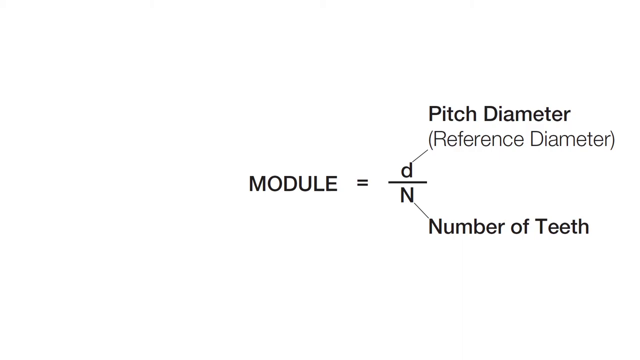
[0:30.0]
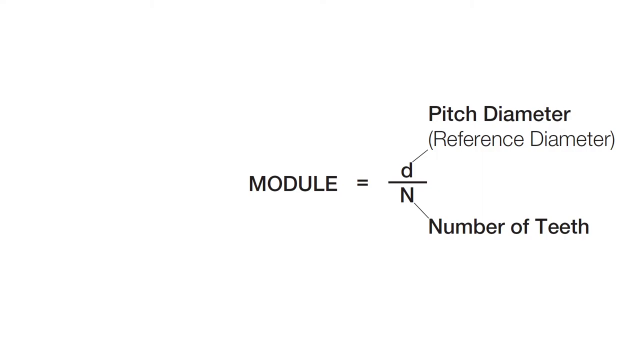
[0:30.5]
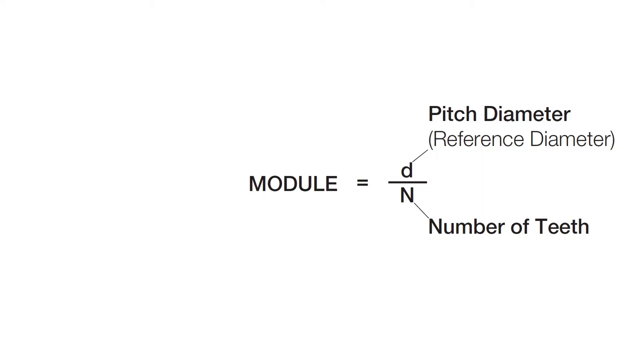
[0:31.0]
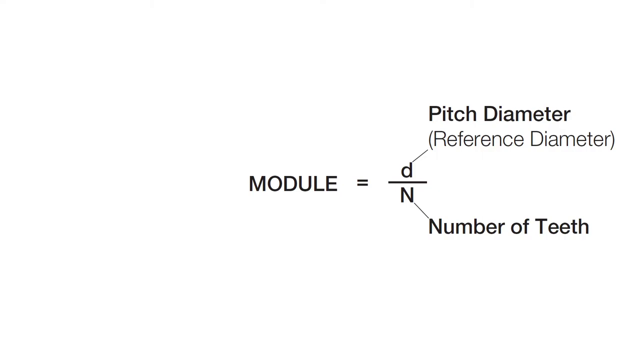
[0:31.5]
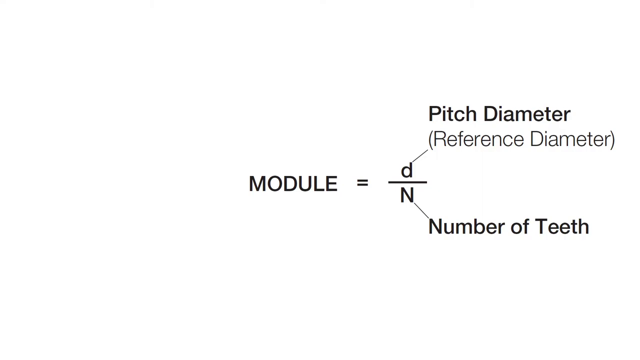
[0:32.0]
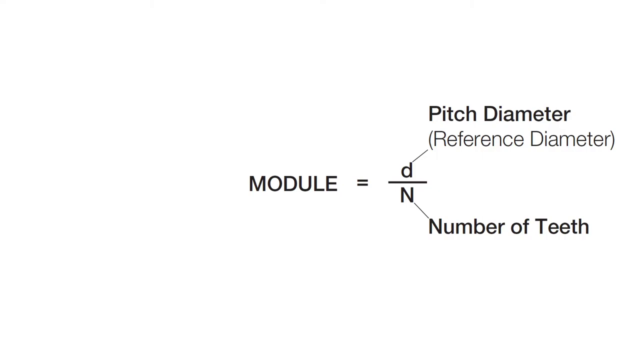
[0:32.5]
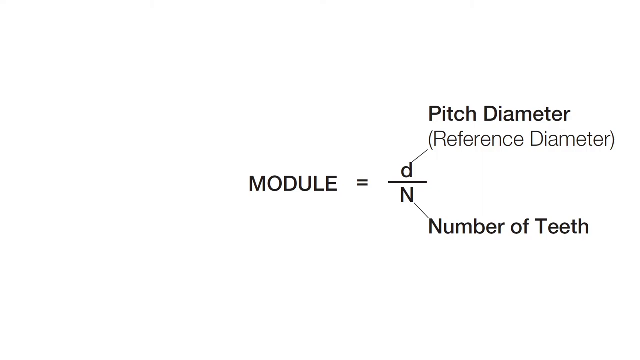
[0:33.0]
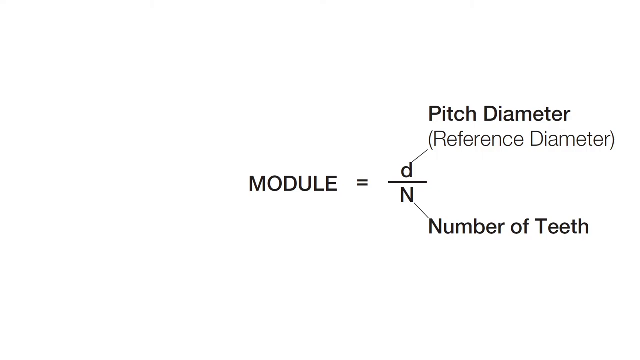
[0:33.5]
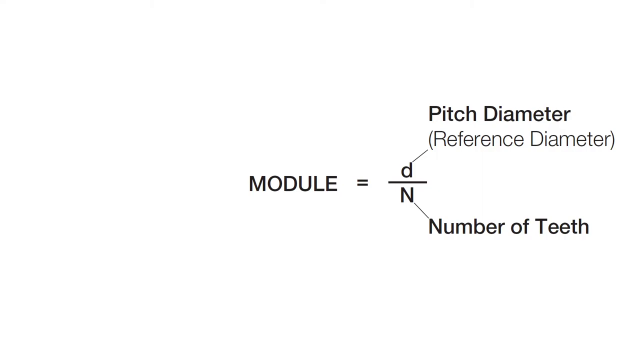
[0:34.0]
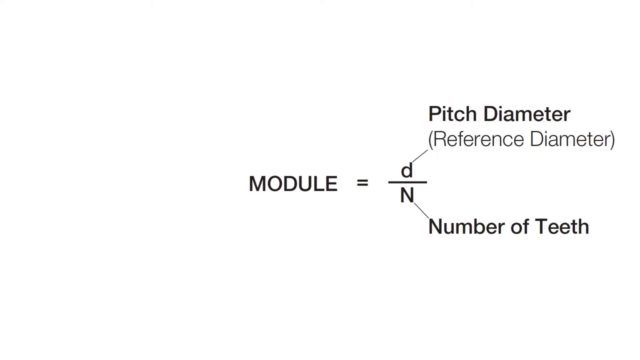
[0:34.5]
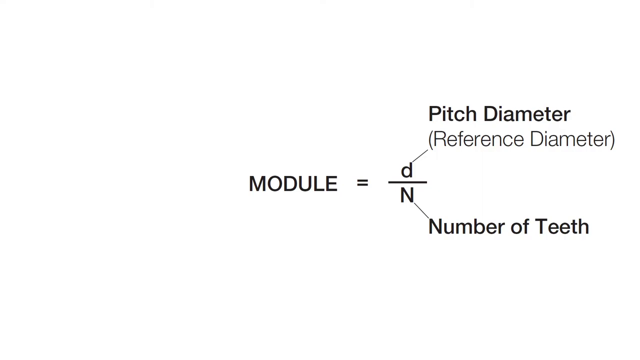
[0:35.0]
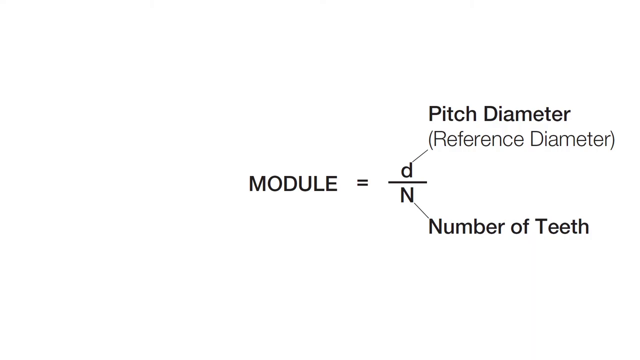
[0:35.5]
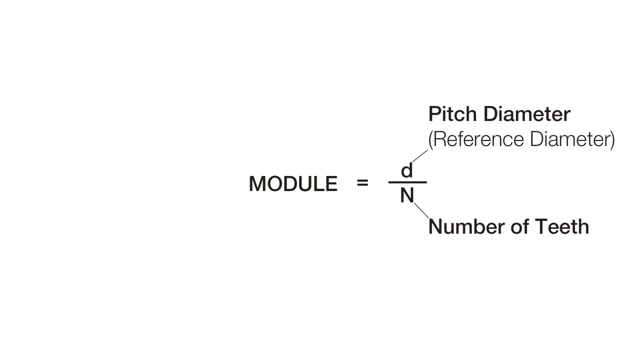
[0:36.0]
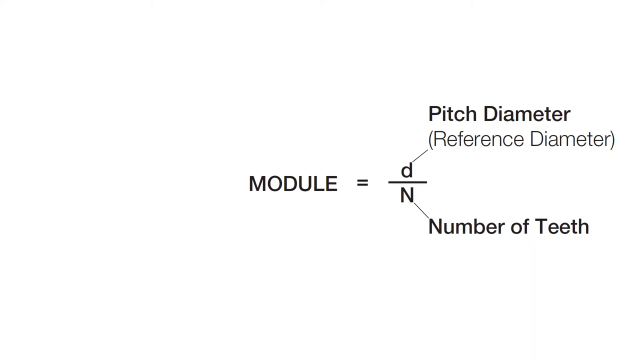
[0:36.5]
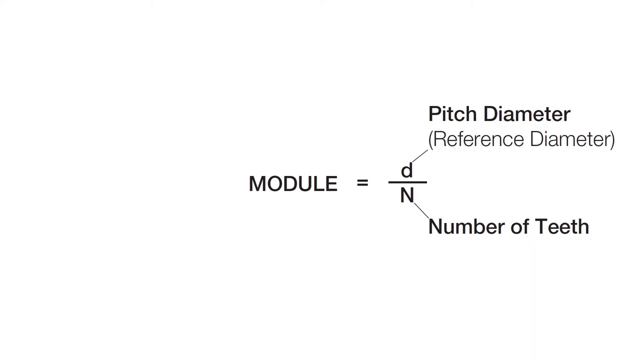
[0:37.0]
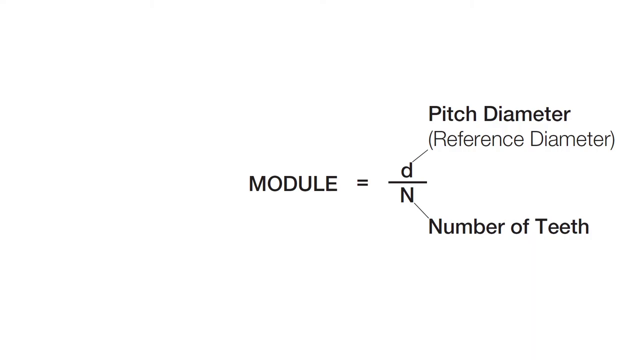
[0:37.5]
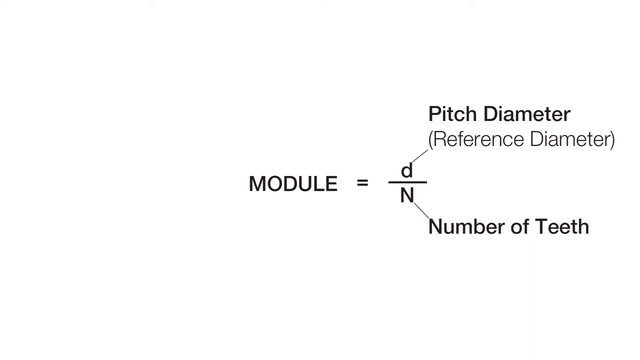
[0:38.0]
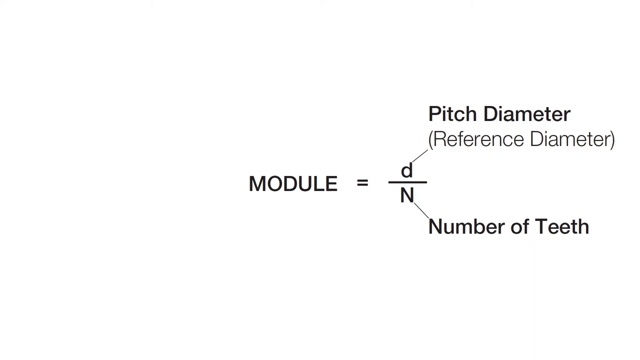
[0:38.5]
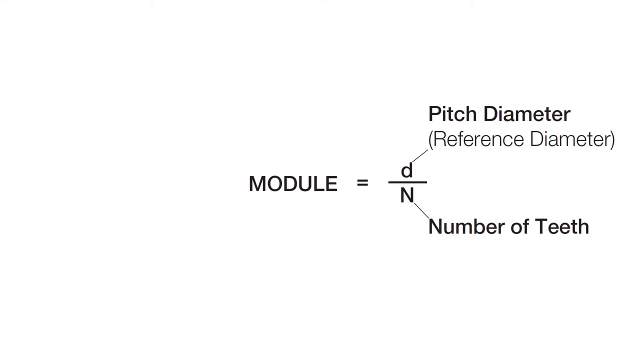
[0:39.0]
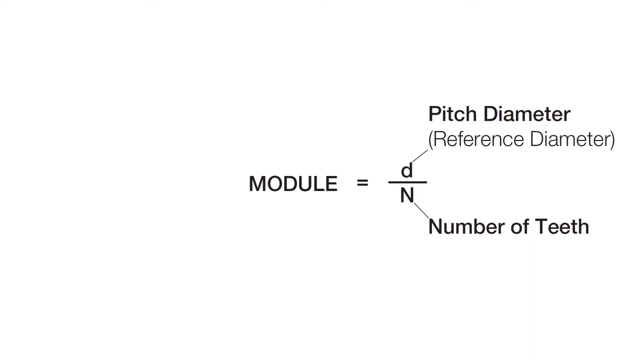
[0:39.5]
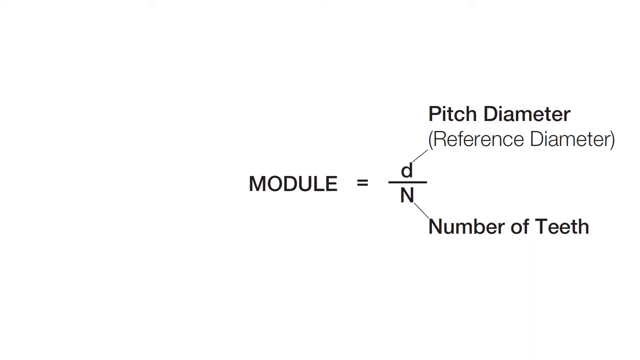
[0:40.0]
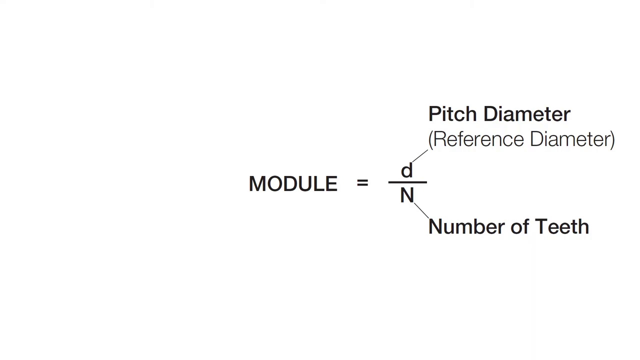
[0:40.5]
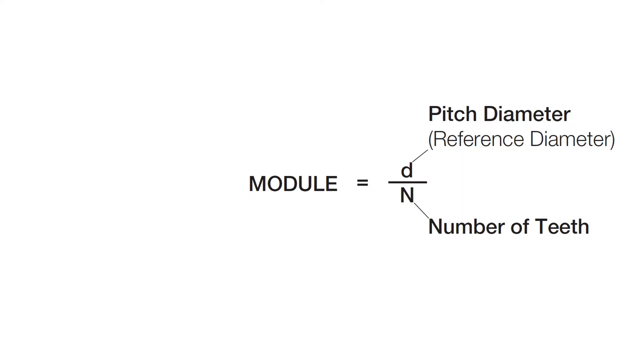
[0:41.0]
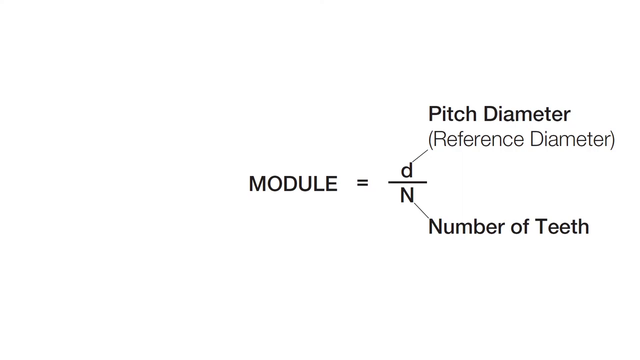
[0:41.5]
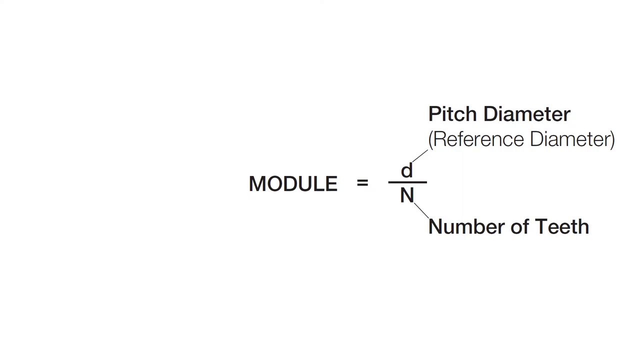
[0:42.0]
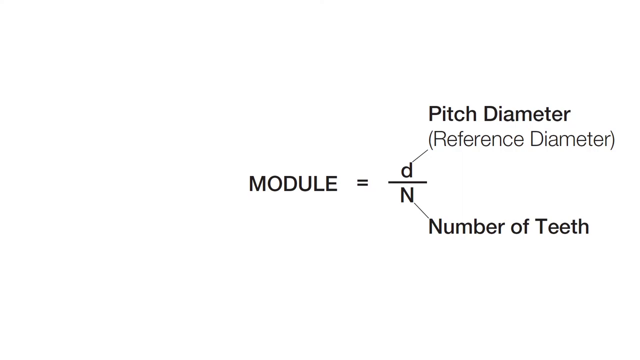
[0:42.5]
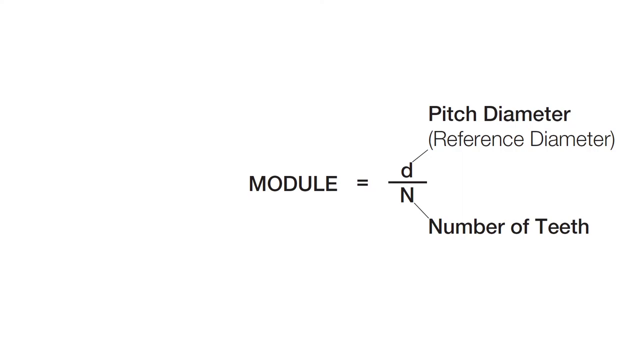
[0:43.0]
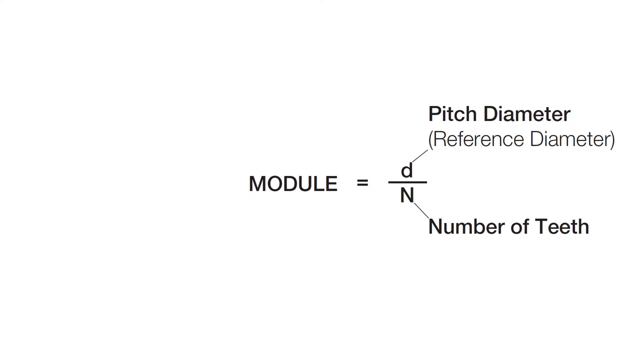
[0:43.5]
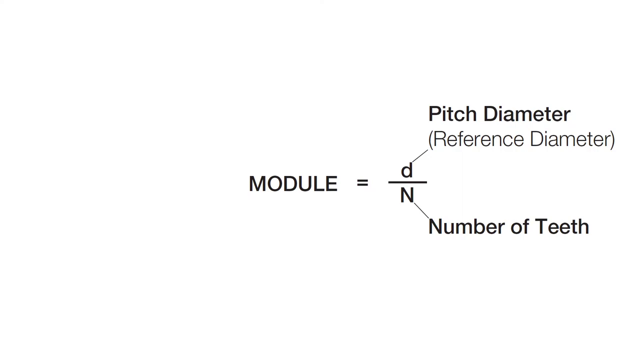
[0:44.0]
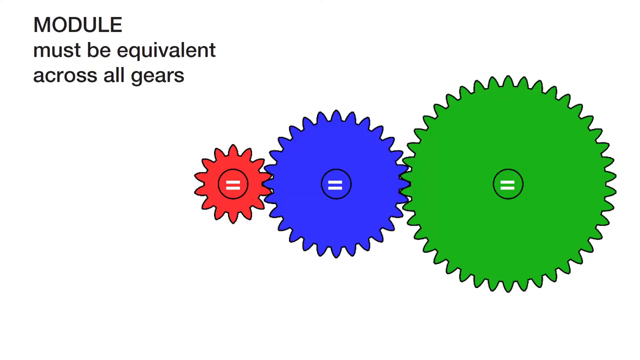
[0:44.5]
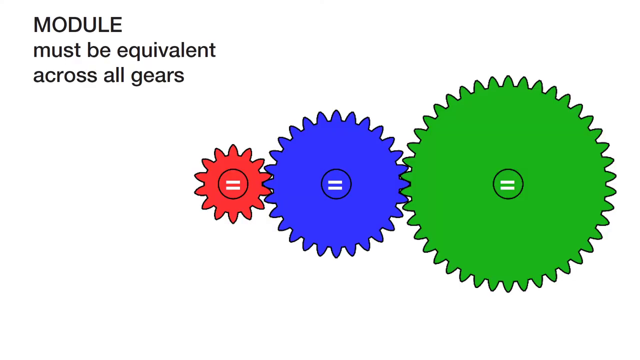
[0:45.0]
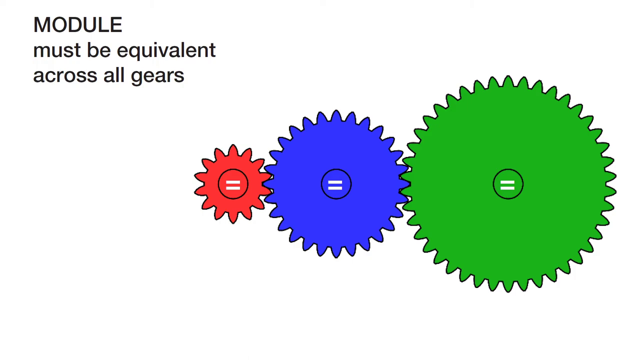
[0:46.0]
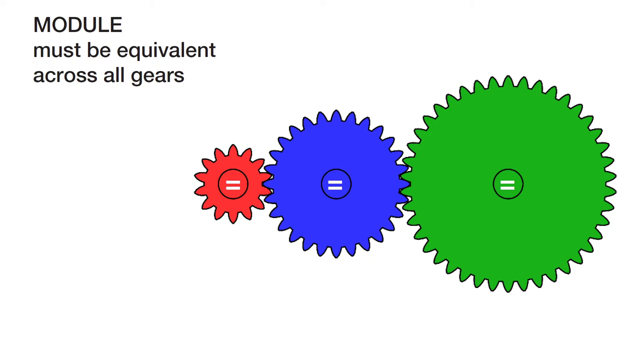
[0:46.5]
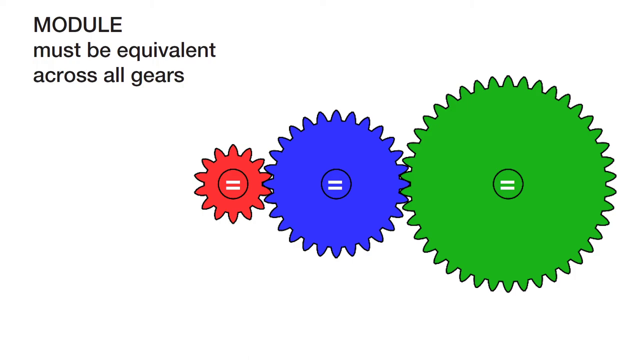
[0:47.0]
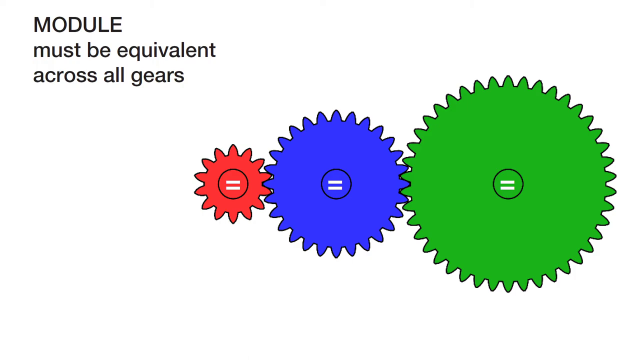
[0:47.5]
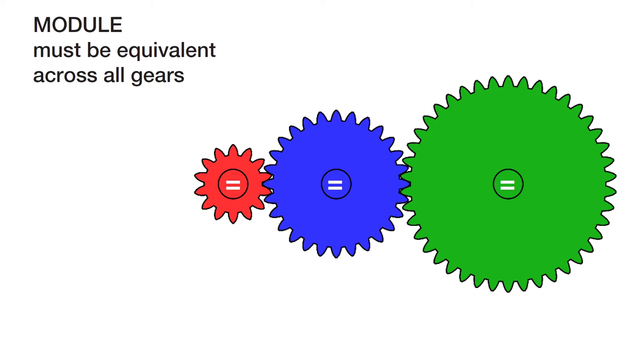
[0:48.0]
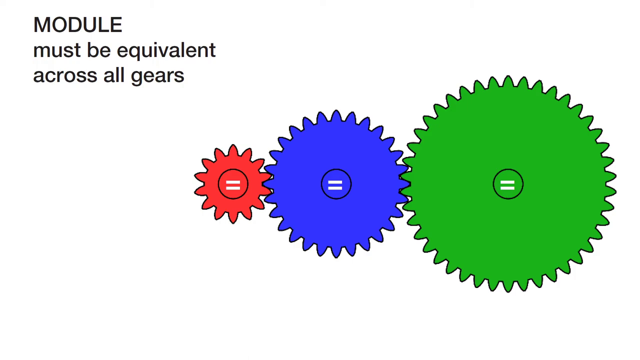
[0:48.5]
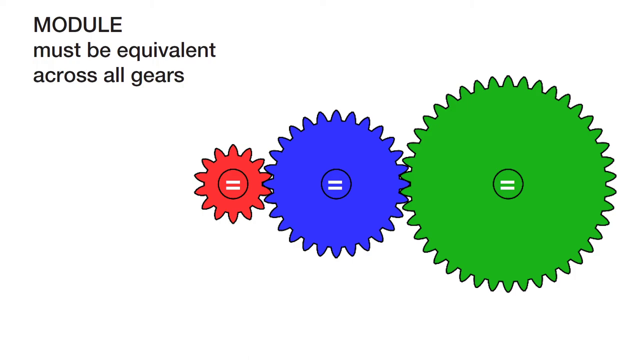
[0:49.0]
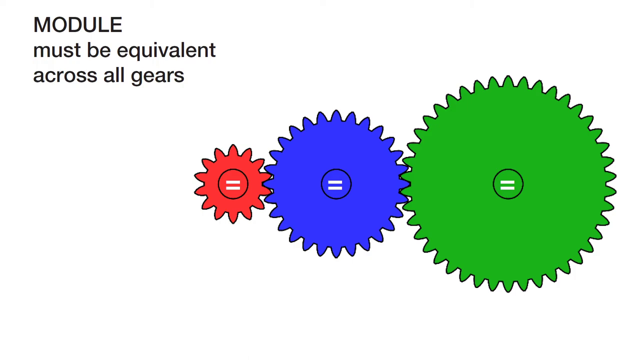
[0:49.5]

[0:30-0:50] The equation module equals lowercase d divided by uppercase N stays on screen, with the arrow from the lowercase d reading "pitch diameter" and the arrow from the capital N reading "number of teeth". These remain for about 15 seconds, then transition to a new white blank space with black text in the top left reading "module must be equivalent across all gears". In the middle of the screen, three gears of varying sizes are shown: the smallest gear is red and connects to a medium-sized blue gear, which connects to a larger green gear. All three gears connect and go into each other. Each gear has a white equals sign in its very middle. The gears take up about 30% of the screen and the small text about 10%, while the rest of the screen remains white.